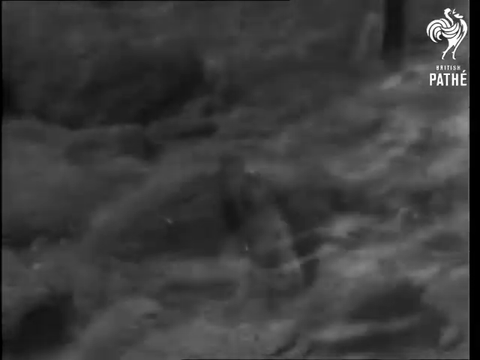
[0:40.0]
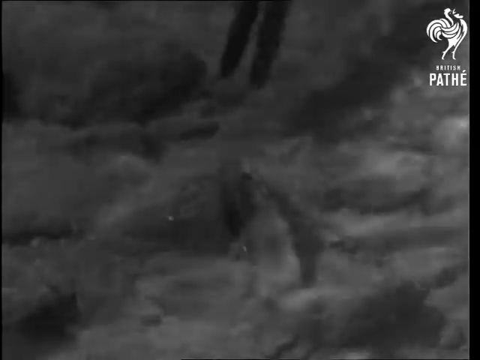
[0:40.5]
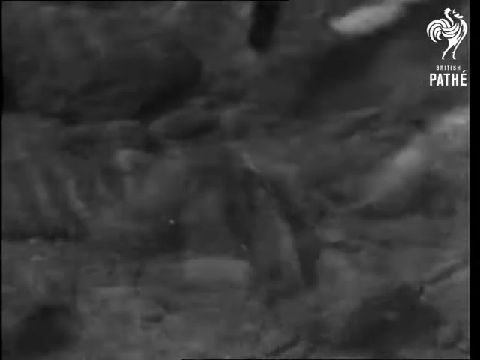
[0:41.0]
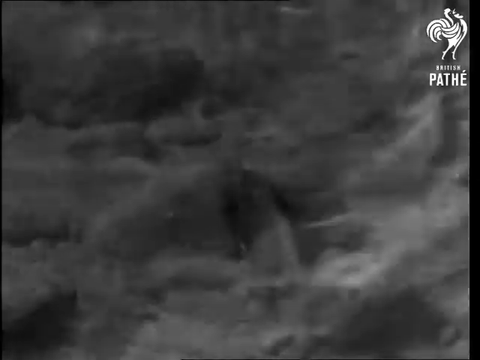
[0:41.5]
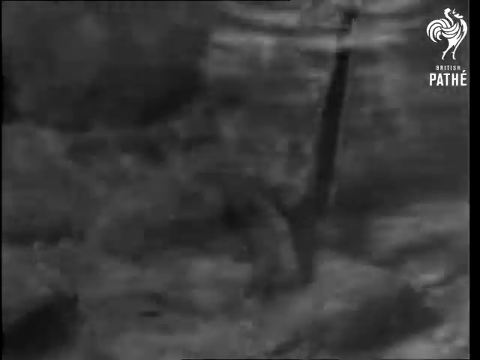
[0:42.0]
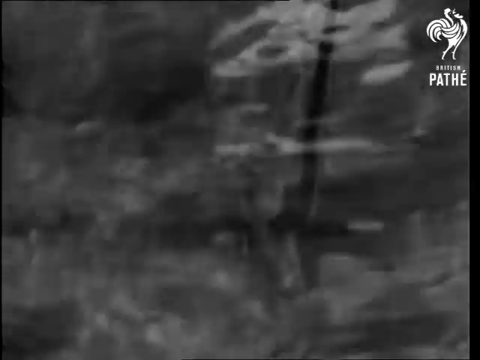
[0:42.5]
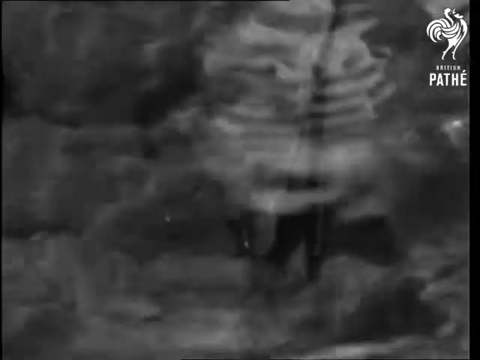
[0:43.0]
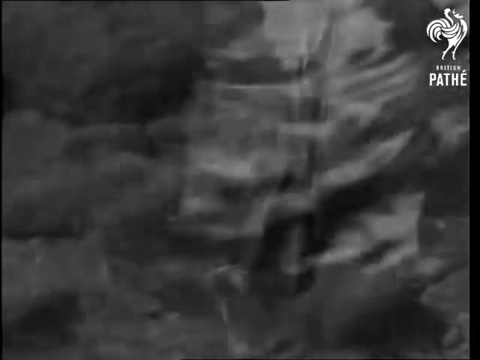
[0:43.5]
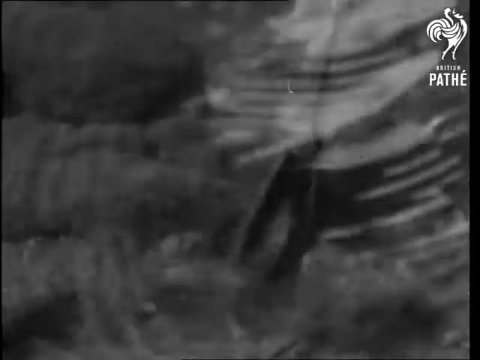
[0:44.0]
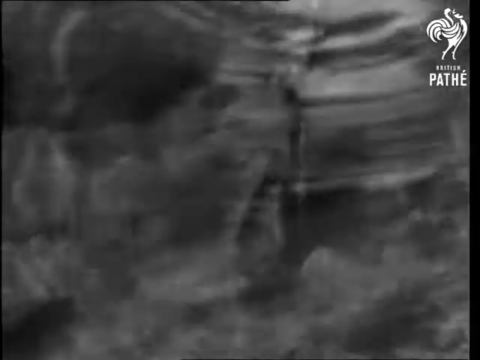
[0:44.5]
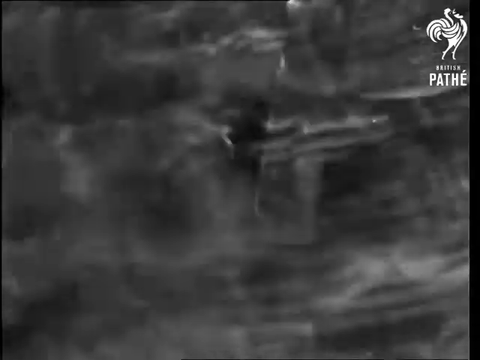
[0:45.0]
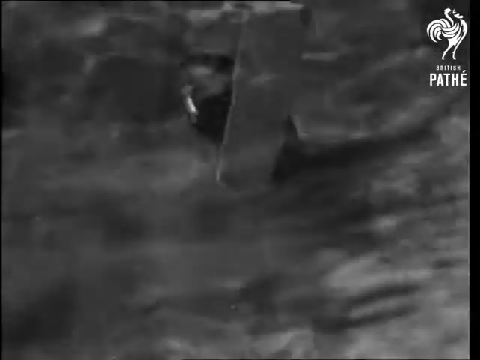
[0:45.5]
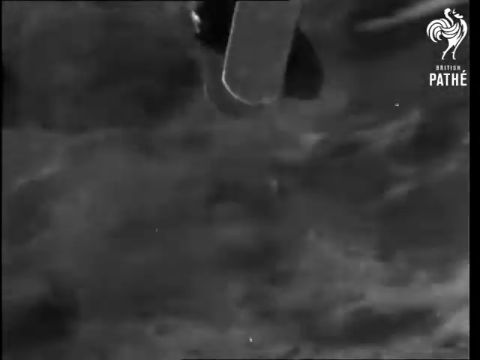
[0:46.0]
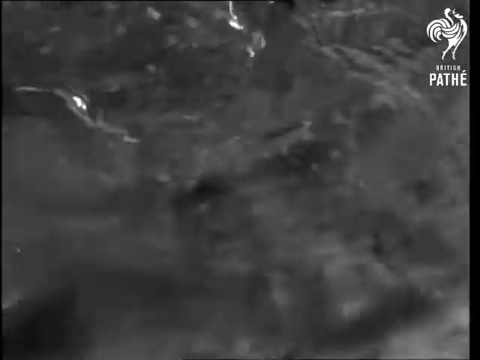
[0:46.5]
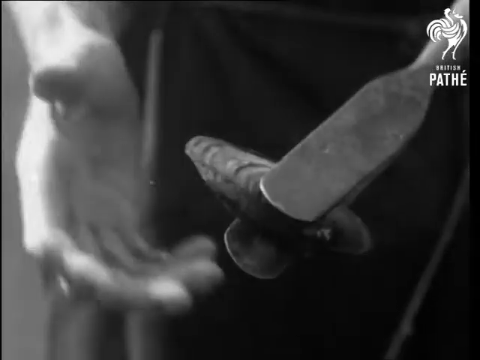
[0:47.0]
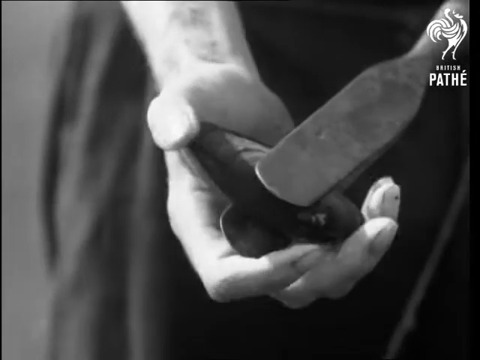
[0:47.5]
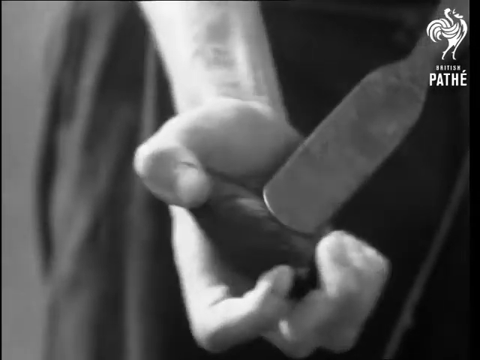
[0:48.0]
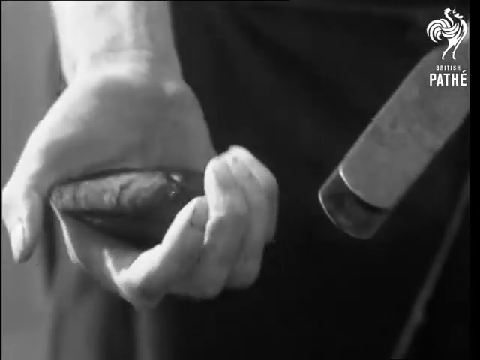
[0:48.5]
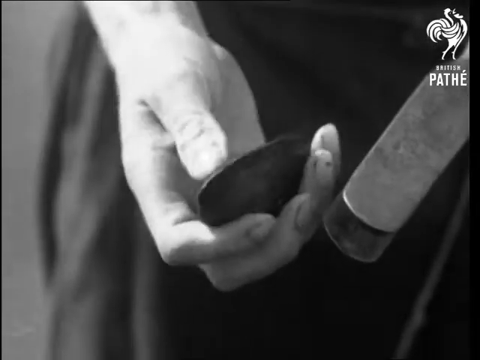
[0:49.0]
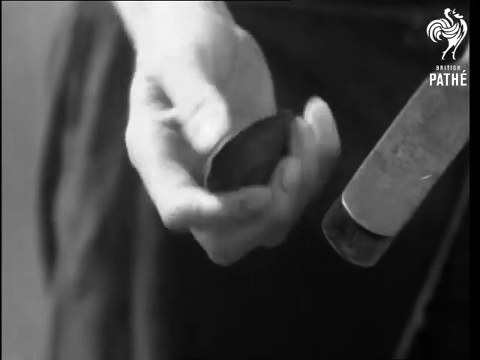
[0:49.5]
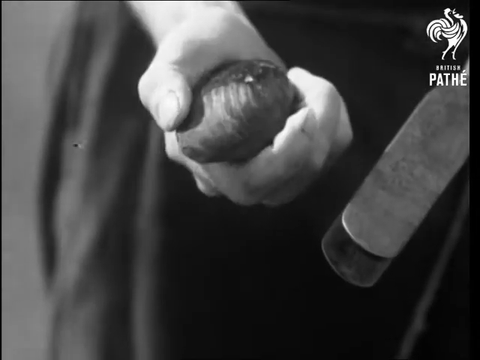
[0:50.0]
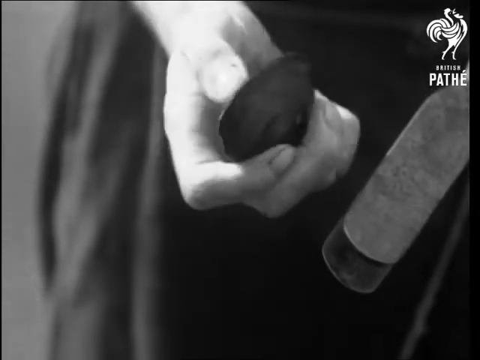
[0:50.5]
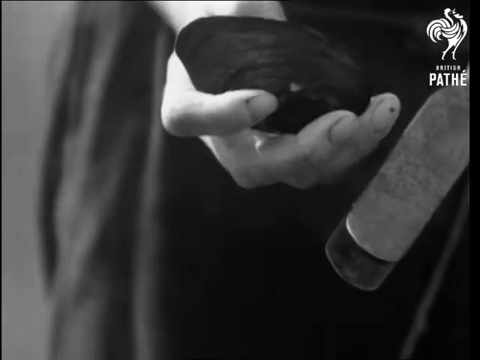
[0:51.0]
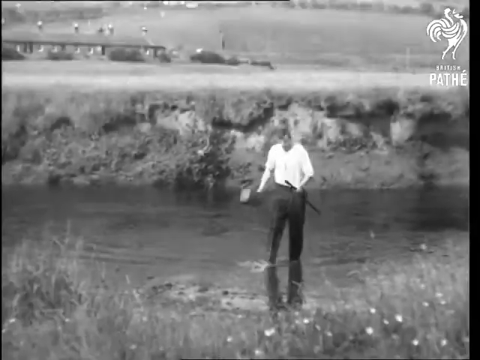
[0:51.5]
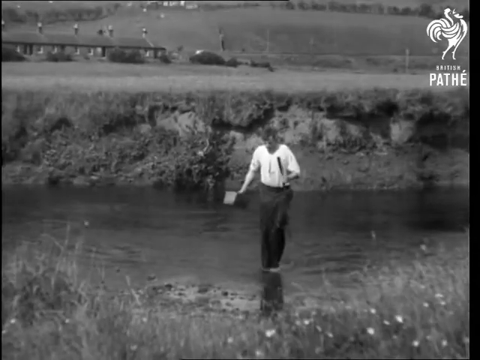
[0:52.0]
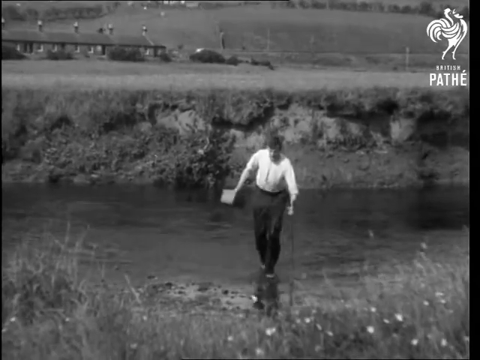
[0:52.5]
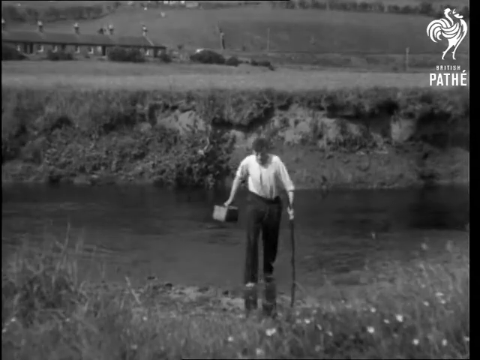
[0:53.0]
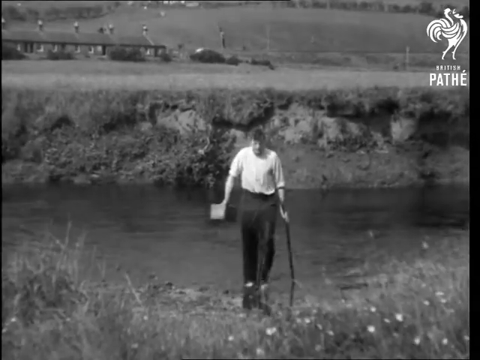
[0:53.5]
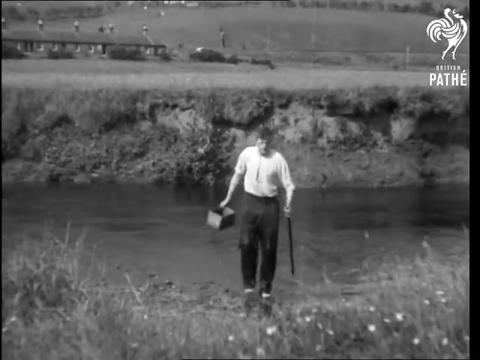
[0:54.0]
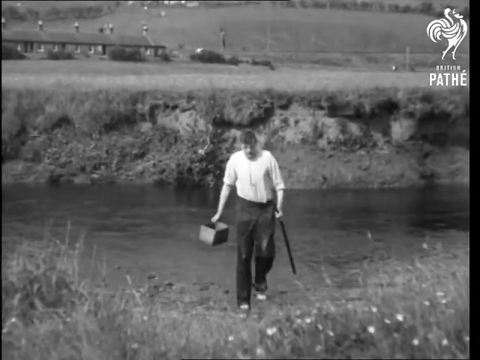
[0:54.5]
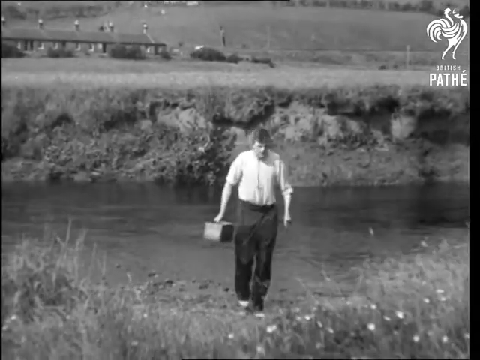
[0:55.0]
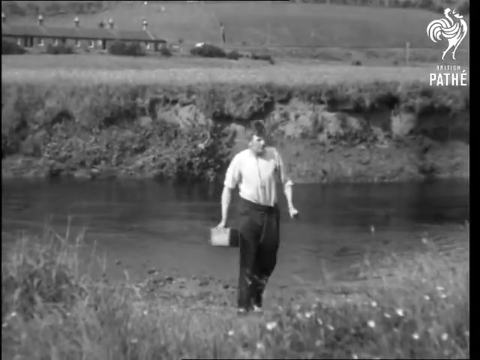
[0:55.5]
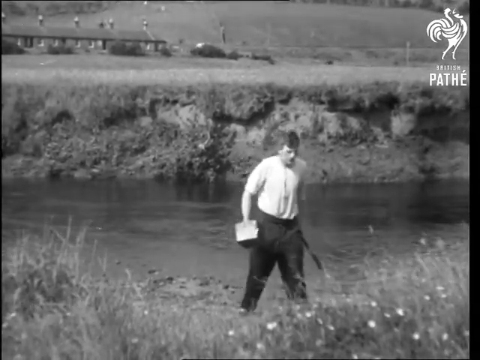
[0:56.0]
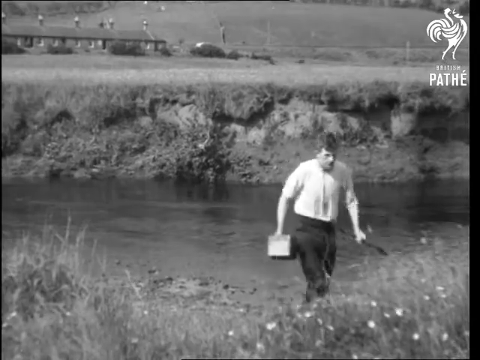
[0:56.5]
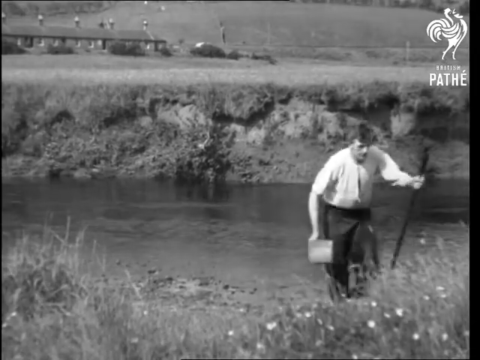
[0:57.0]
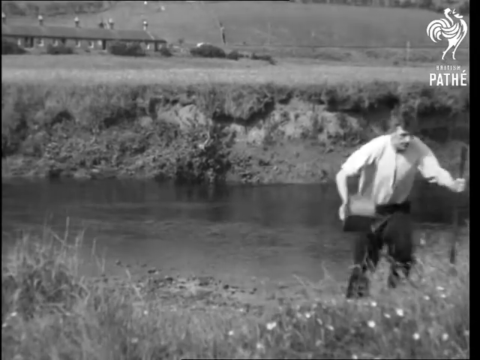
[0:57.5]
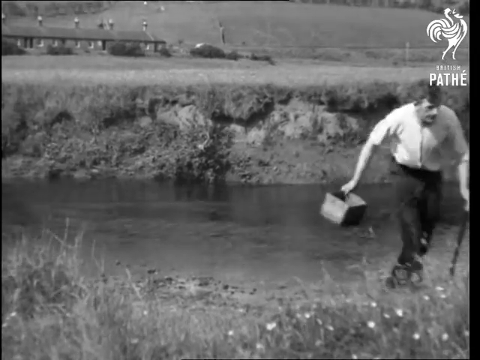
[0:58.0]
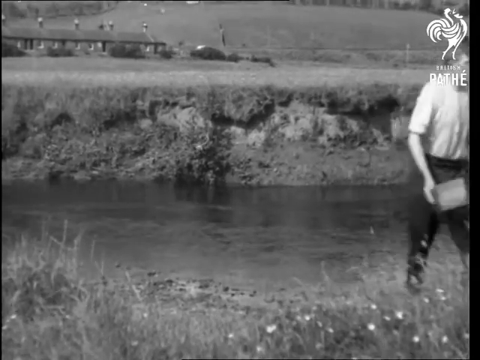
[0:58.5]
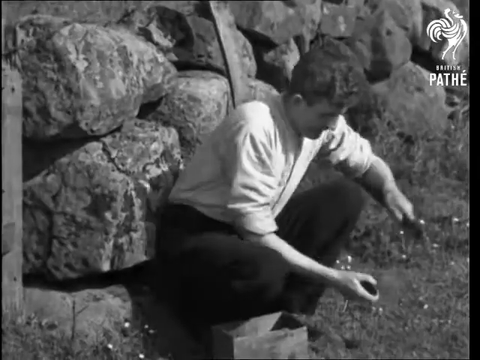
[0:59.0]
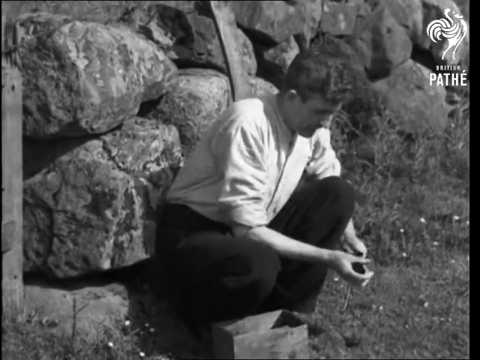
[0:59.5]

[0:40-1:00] Someone is clamming, trying to get clams, shells or mollusks from underwater. Rocks are visible on the bottom under the water. The tool used to grab the clams looks like it has metal pinchers like tongs; it is poked down into the water, traps the shell between the two tongs, and is pulled out, and the other hand pulls the shell off the tool. A man then walks out of the river back to the shore, holding in his right hand the box with glass for looking down to the bottom of the river and in his left hand the device with tongs. Water drips off his body as he comes to shore. In the background are buildings and a car driving along a road. The edges of the embankment are about five or six feet tall, with the river dug into the ground, and grass grows there. The man then squats down on the side.